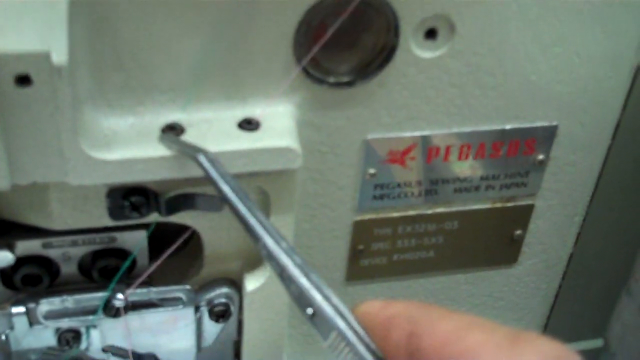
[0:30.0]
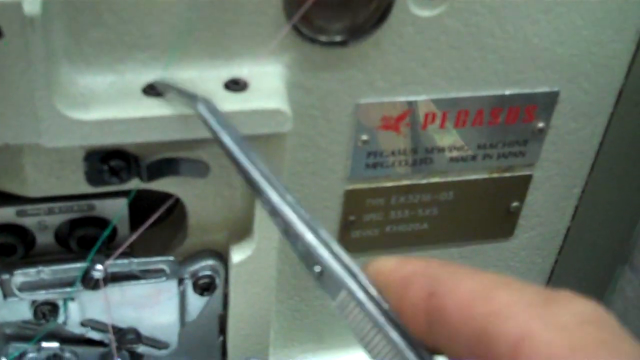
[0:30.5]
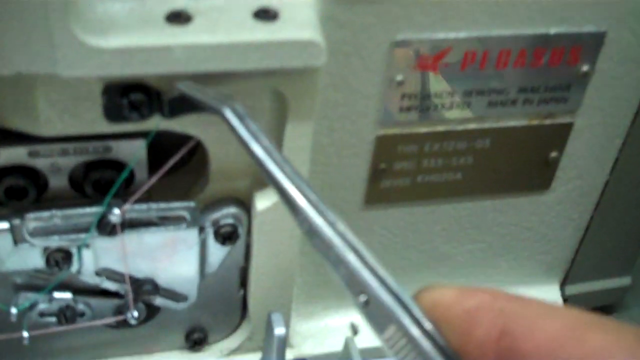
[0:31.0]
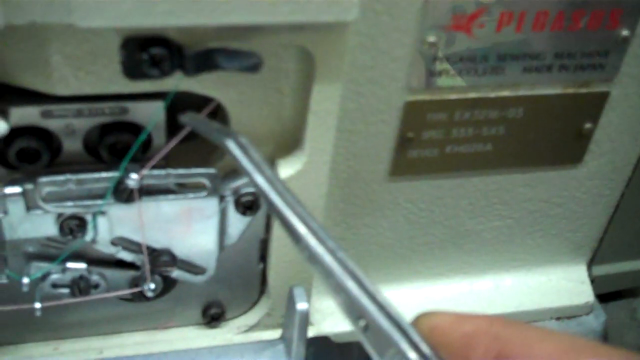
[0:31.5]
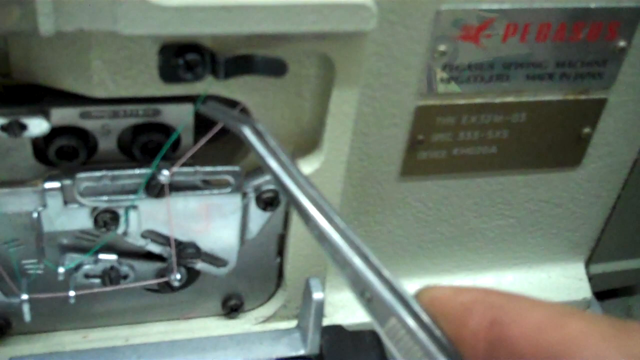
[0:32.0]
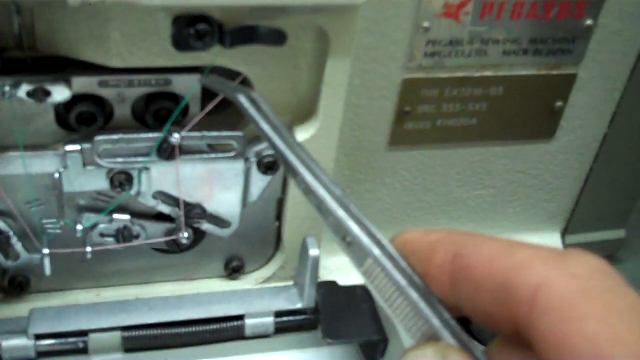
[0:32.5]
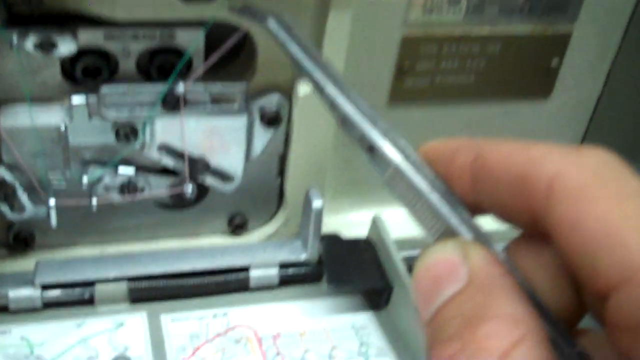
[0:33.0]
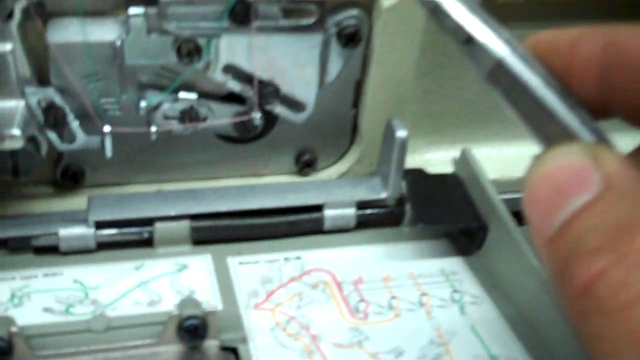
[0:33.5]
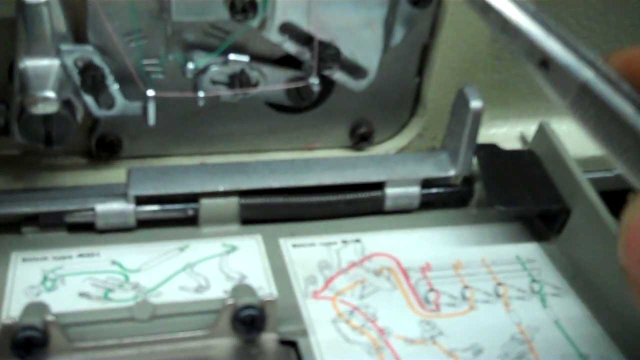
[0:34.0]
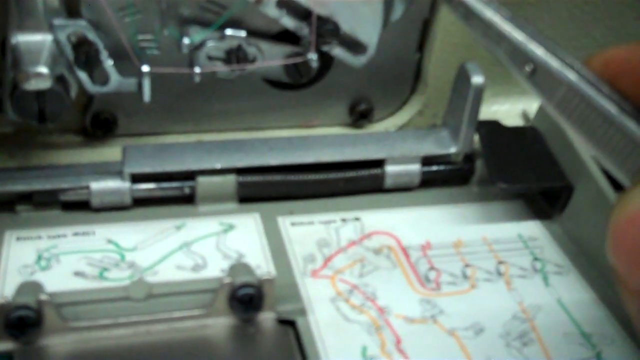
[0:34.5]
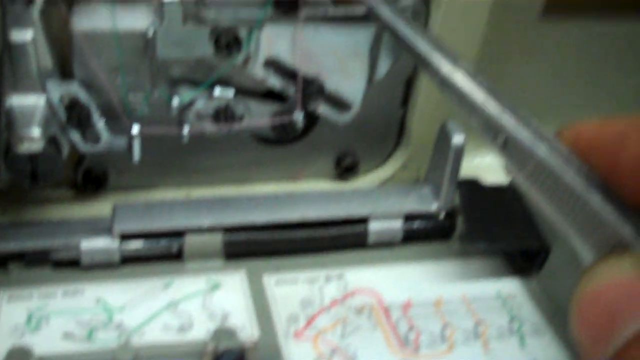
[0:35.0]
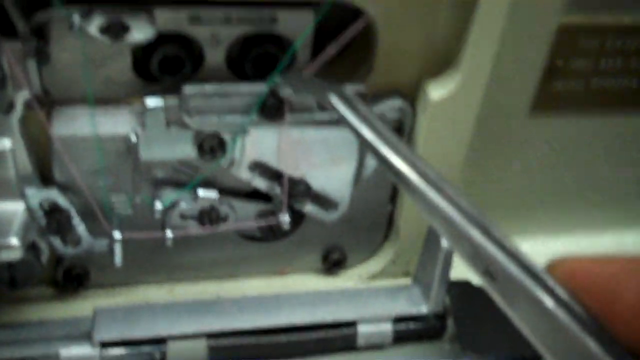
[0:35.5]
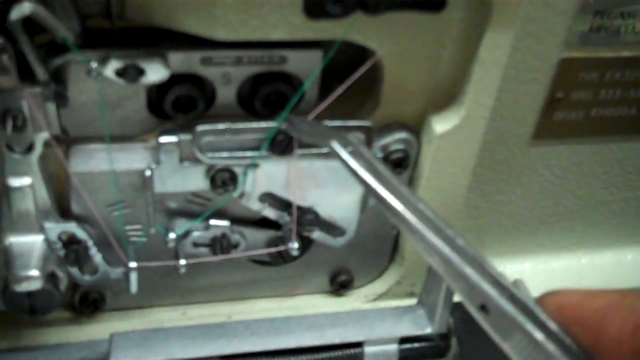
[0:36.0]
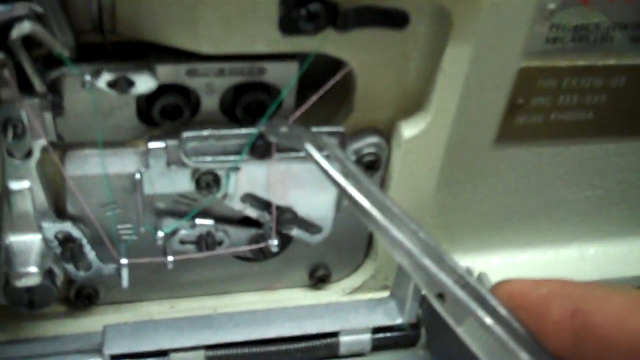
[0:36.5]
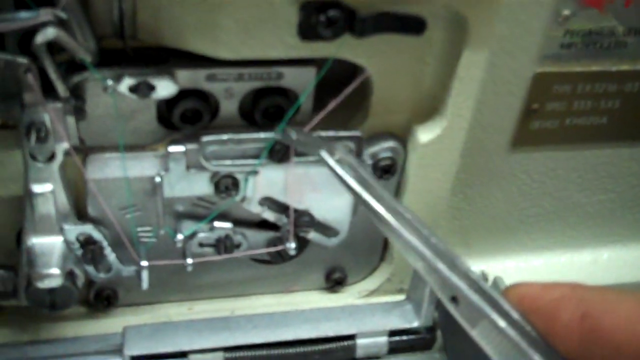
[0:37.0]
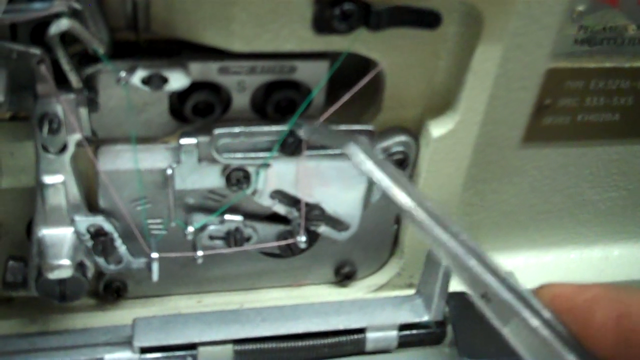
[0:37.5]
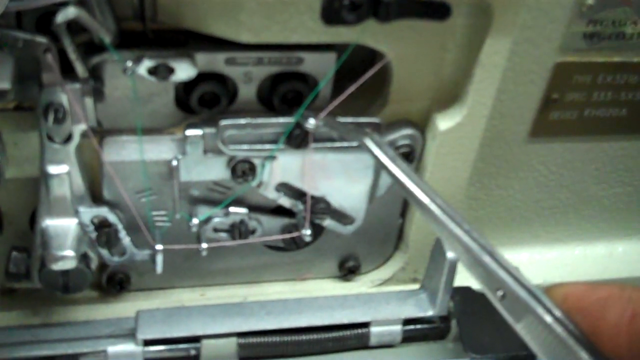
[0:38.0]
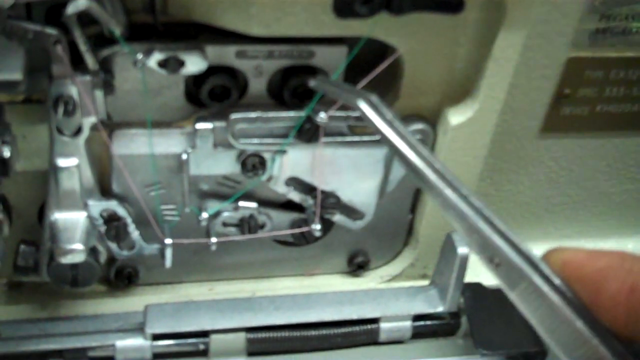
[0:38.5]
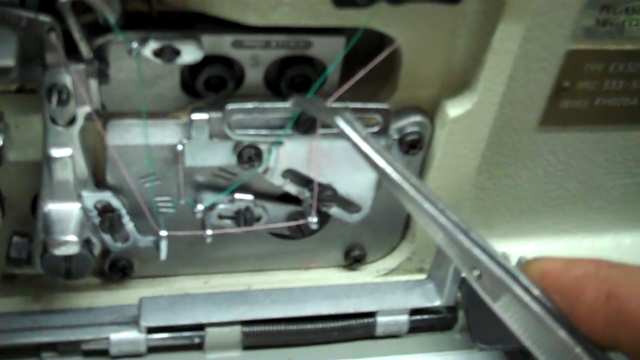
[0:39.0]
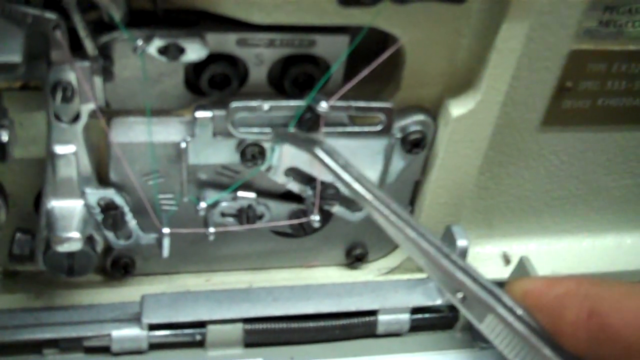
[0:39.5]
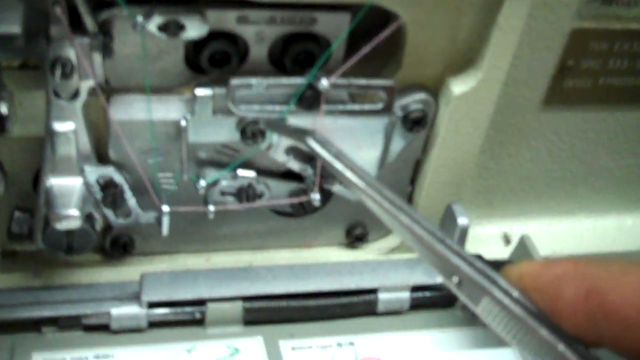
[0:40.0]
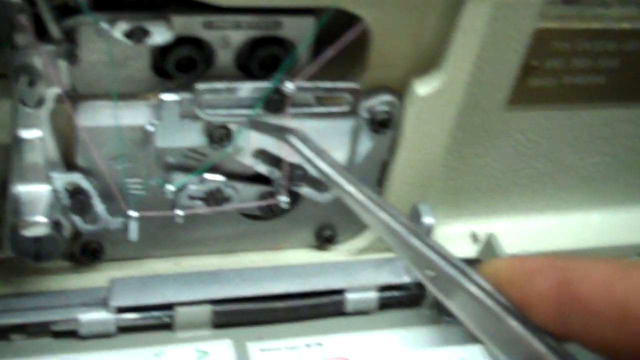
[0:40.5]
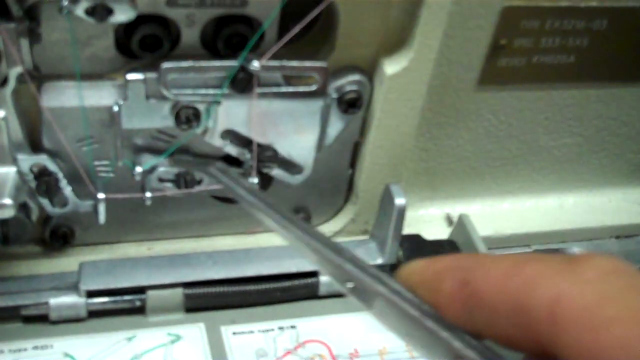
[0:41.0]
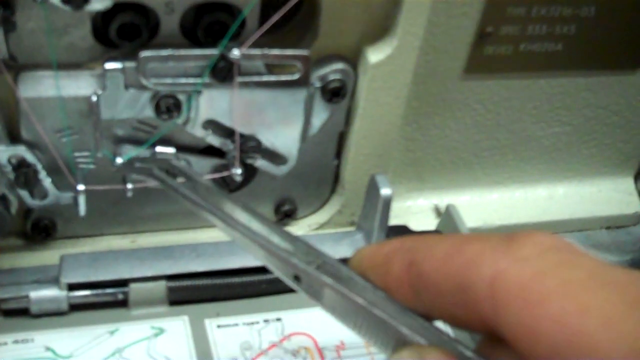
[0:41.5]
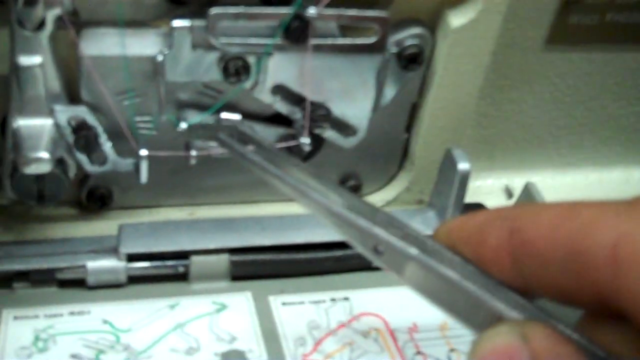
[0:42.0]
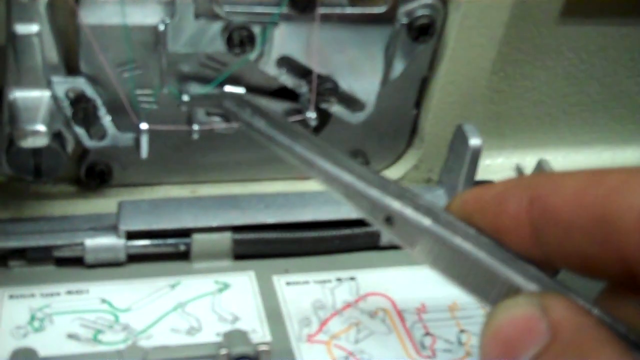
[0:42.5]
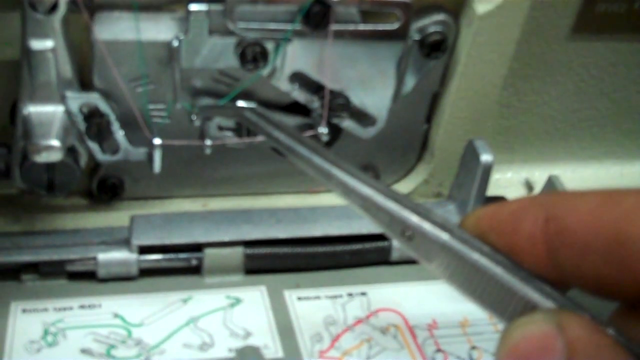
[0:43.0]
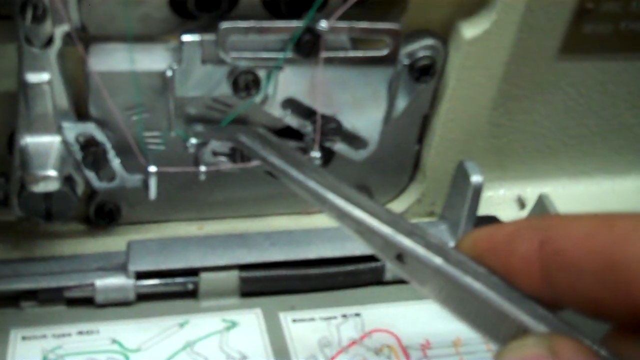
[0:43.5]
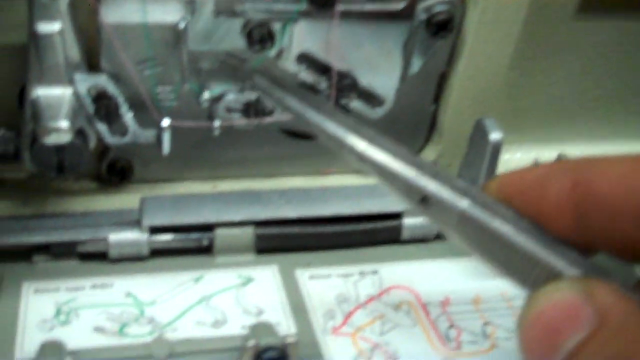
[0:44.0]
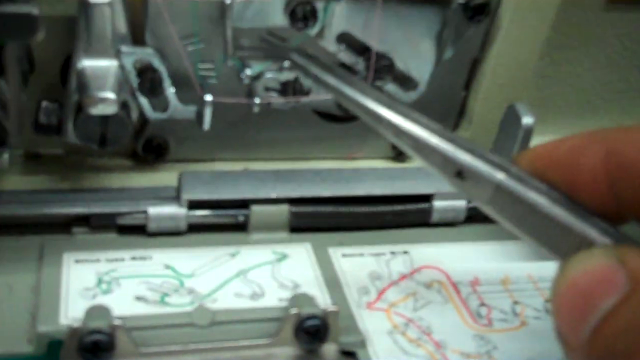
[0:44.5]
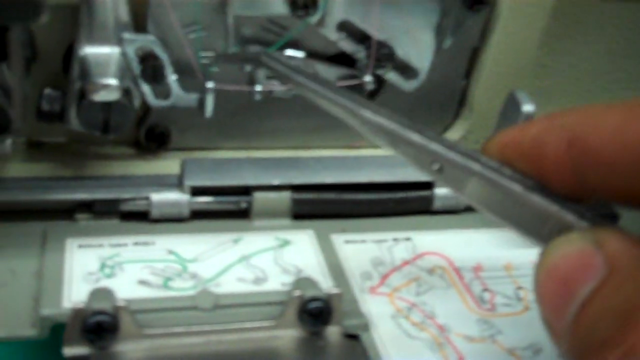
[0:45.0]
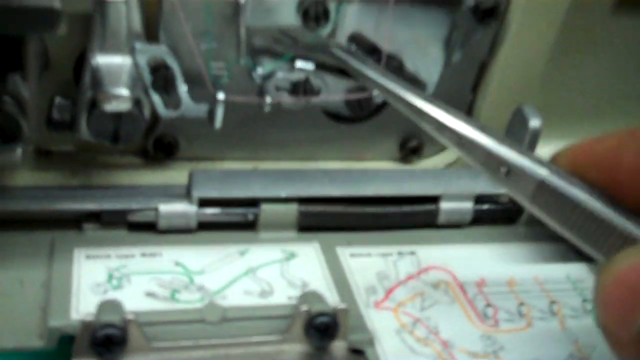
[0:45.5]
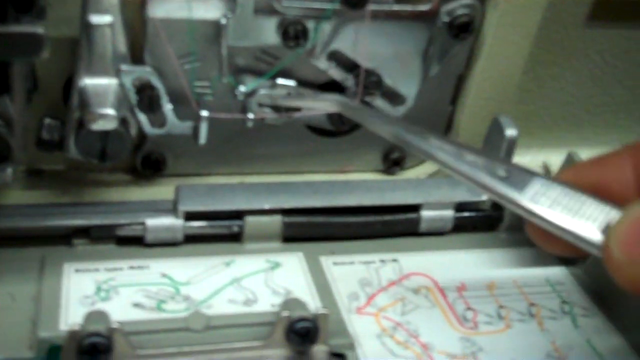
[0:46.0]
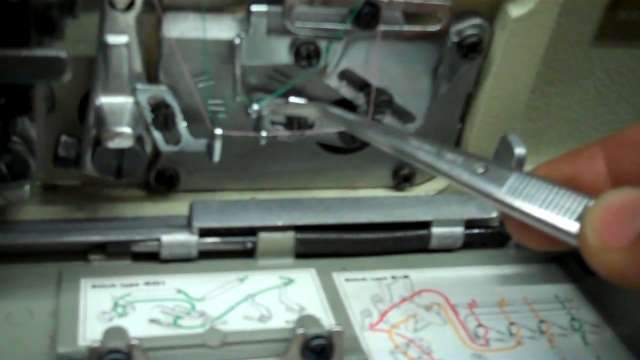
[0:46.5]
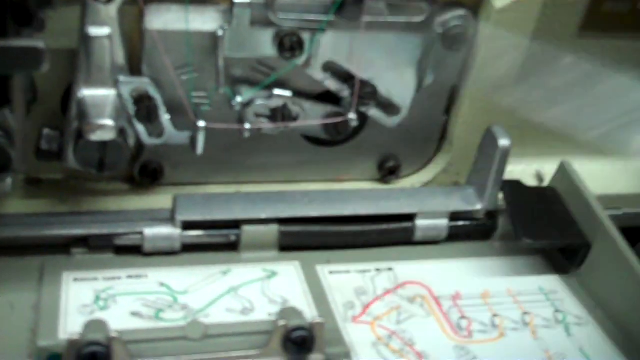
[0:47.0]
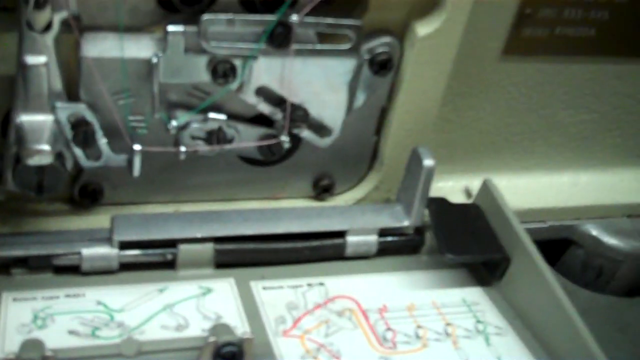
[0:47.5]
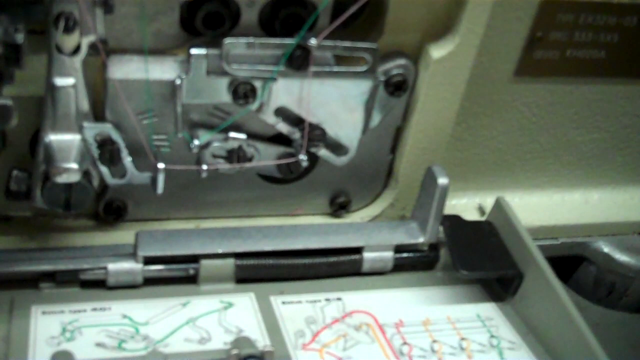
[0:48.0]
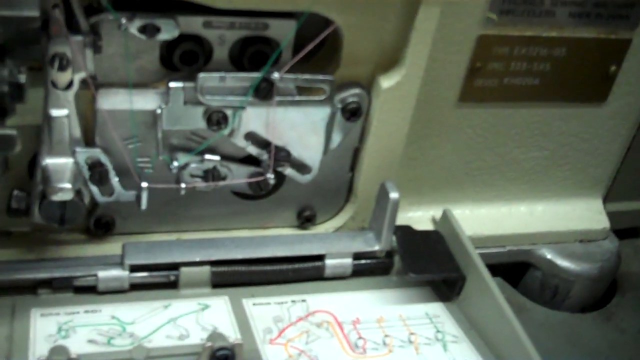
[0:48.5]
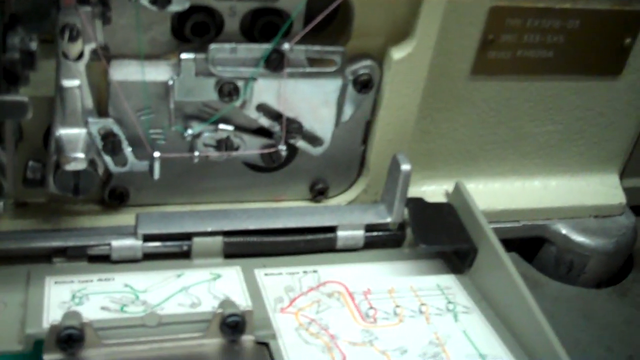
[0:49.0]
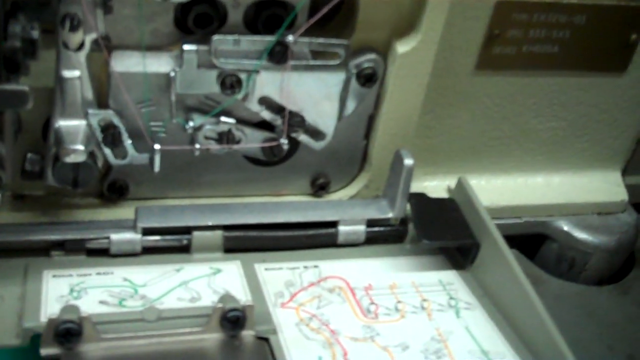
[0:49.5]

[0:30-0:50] The back of a machine used for the spools of thread is visible. The machine is very large and white, with two metal labels on the right side, and has different metal features and screws connected together. Tweezers point at the back of the machine, which looks to be used for sewing or making something with the thread. The green thread is intertwined in the machine between different areas, screws and metal pieces. Below the metal area are two diagrams with lines of multiple colors. The tweezers make adjustments to the green thread where it is intertwined between the screws and metal pieces. A lighter-colored string, possibly the pink thread, is also intertwined in the metal pieces and follows the outer edges or outline of the green thread.